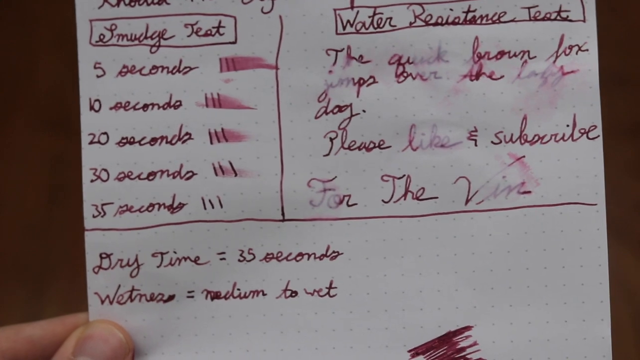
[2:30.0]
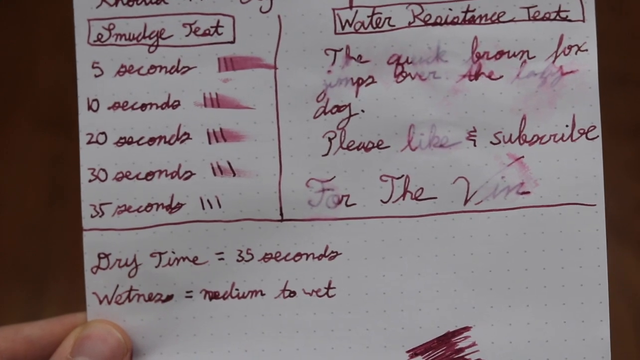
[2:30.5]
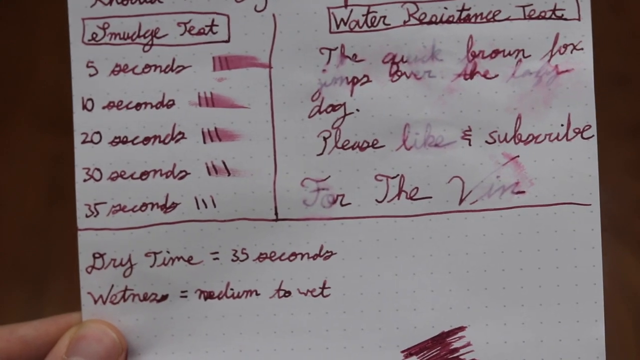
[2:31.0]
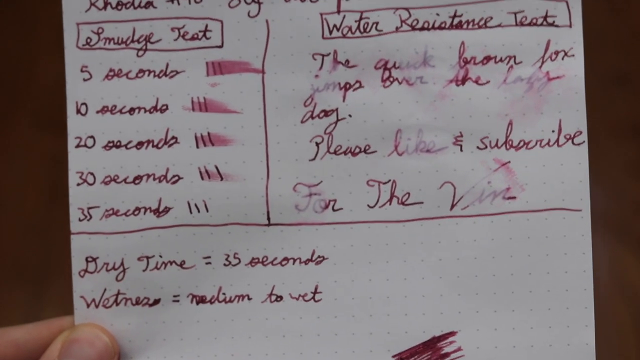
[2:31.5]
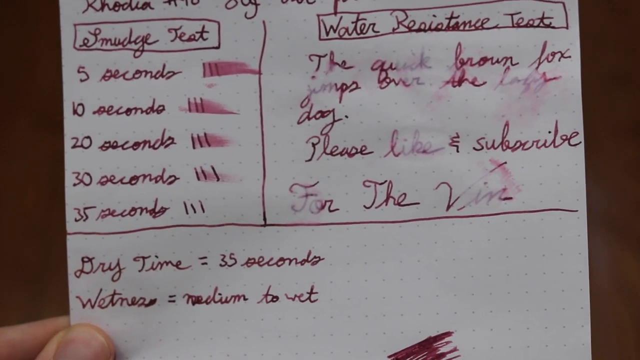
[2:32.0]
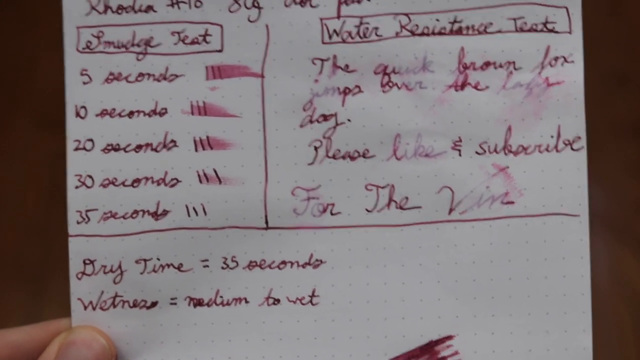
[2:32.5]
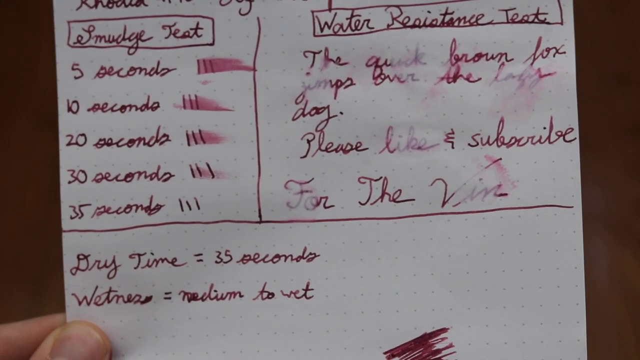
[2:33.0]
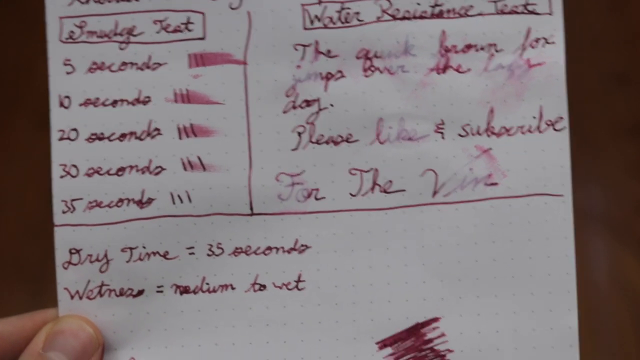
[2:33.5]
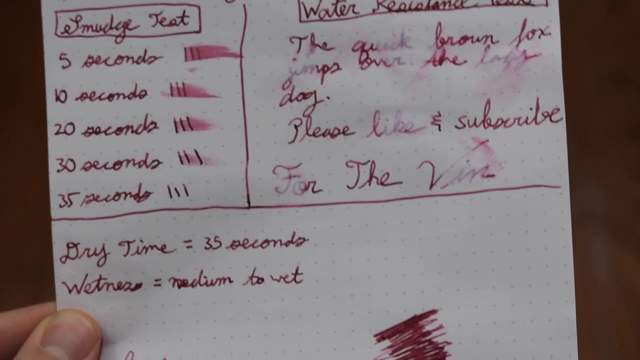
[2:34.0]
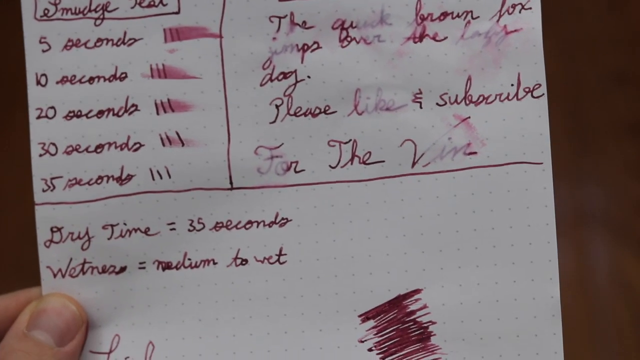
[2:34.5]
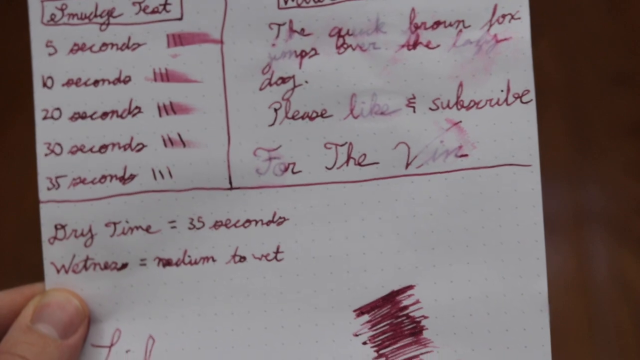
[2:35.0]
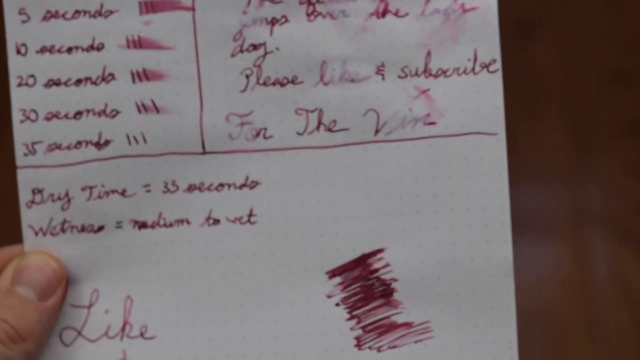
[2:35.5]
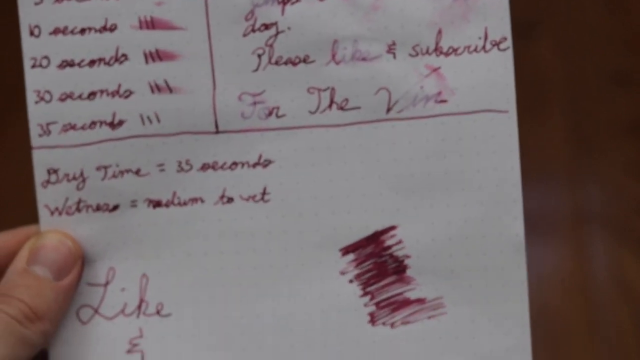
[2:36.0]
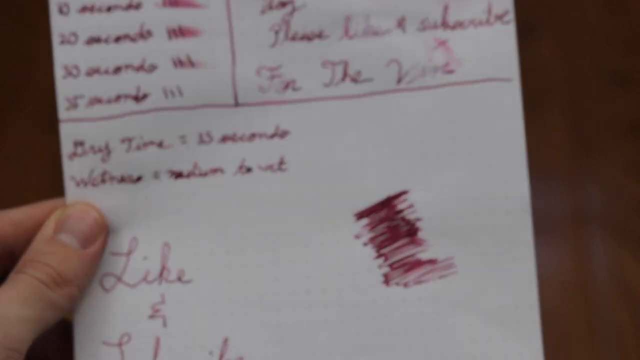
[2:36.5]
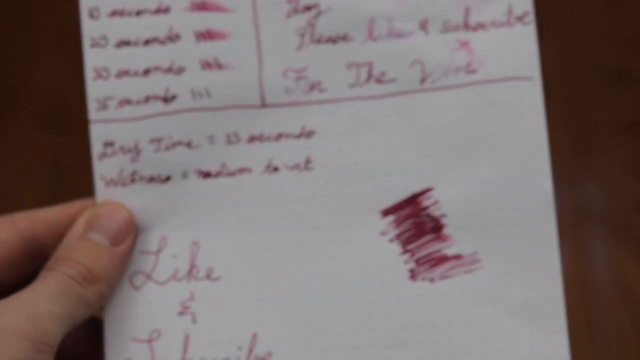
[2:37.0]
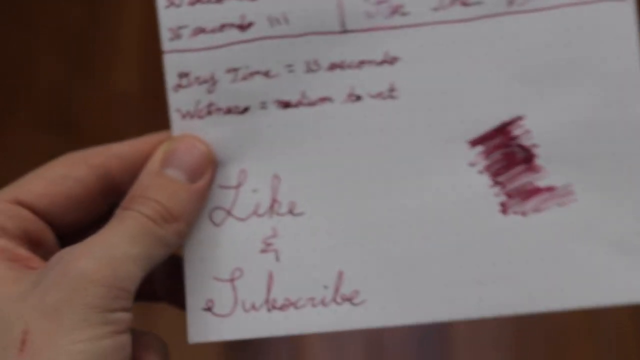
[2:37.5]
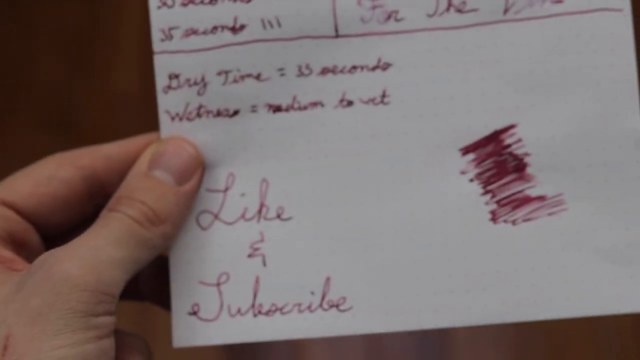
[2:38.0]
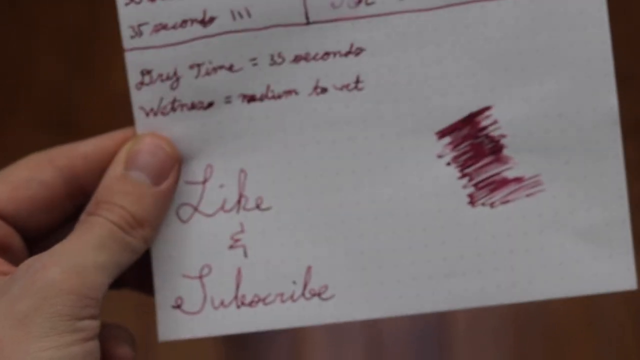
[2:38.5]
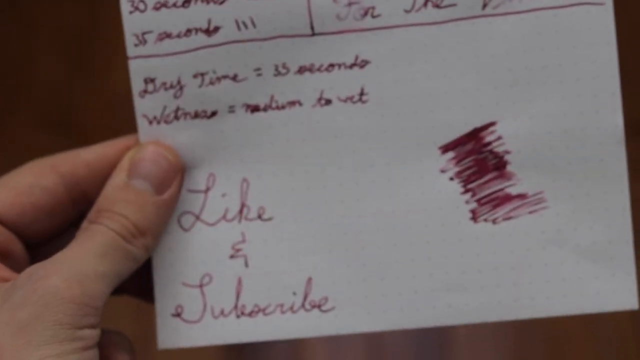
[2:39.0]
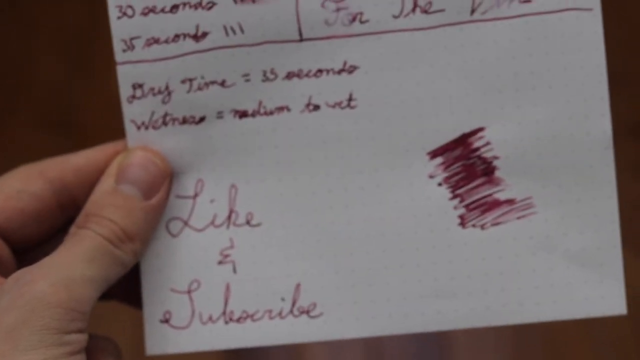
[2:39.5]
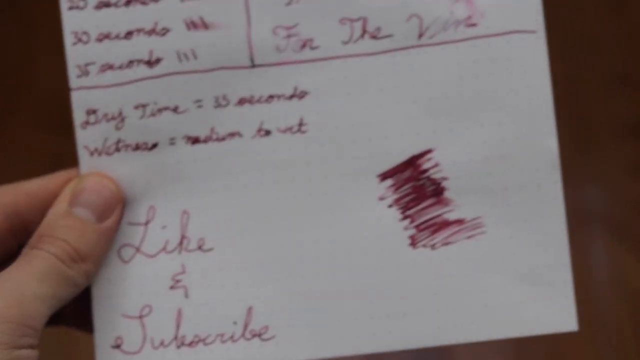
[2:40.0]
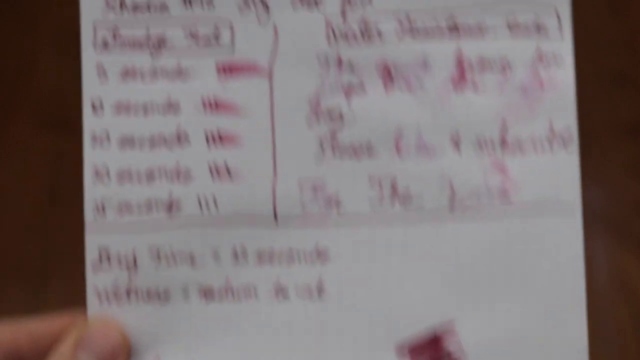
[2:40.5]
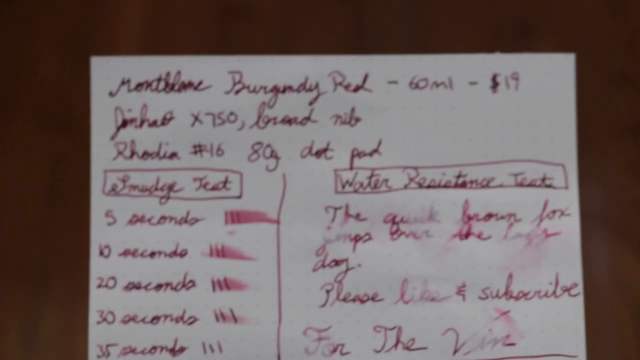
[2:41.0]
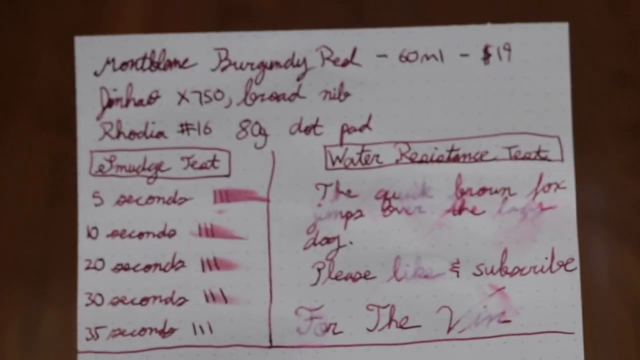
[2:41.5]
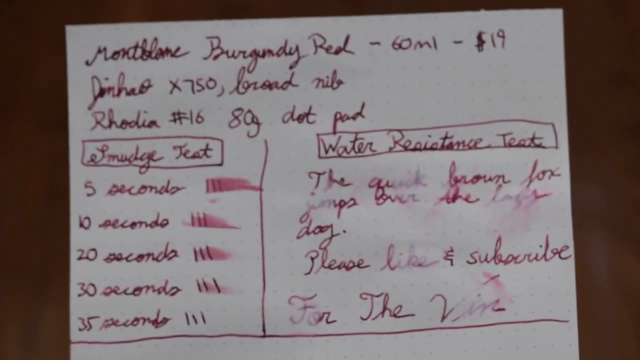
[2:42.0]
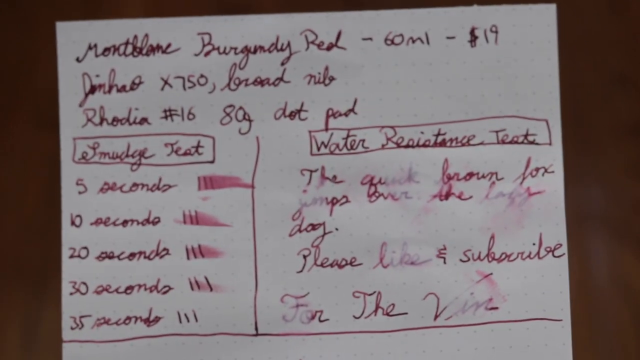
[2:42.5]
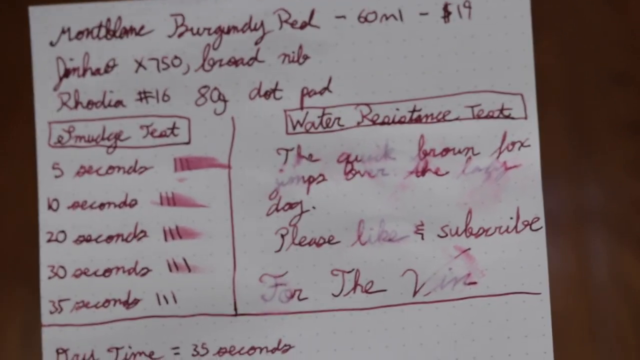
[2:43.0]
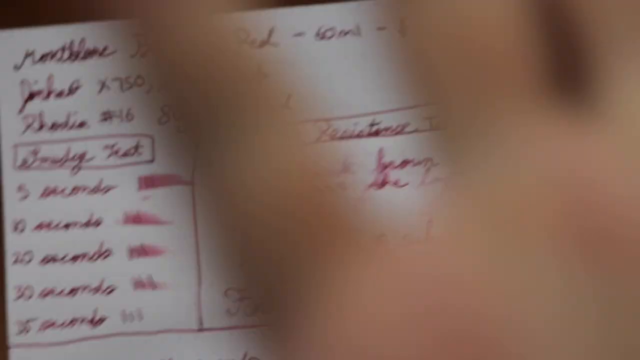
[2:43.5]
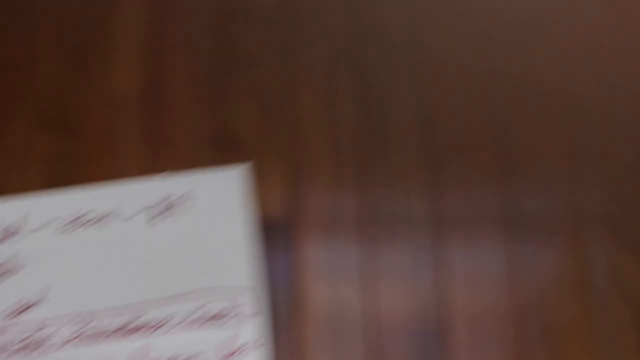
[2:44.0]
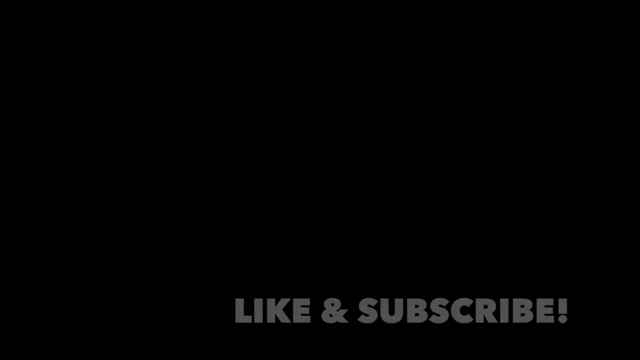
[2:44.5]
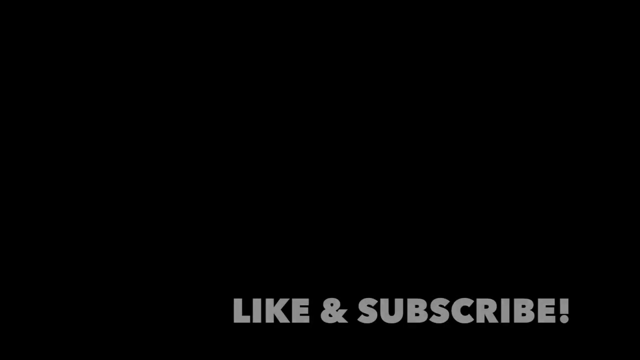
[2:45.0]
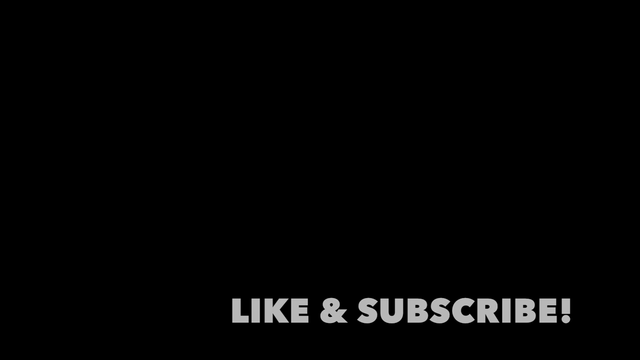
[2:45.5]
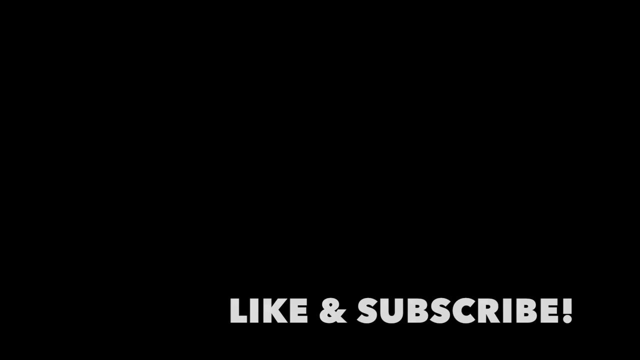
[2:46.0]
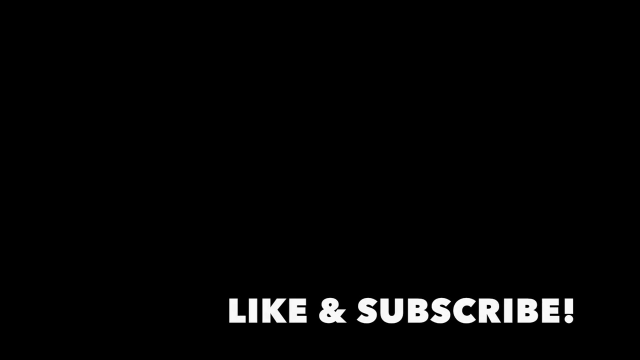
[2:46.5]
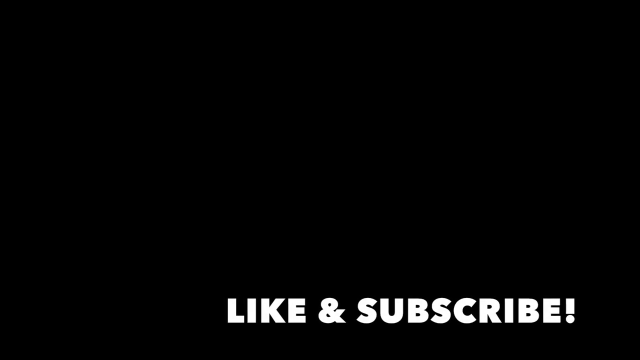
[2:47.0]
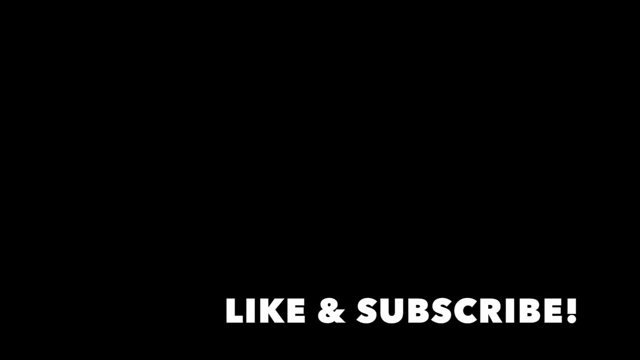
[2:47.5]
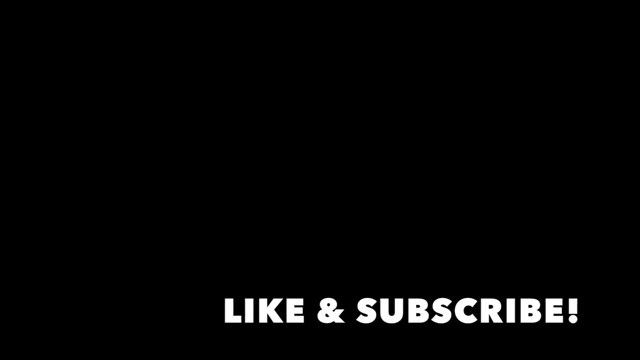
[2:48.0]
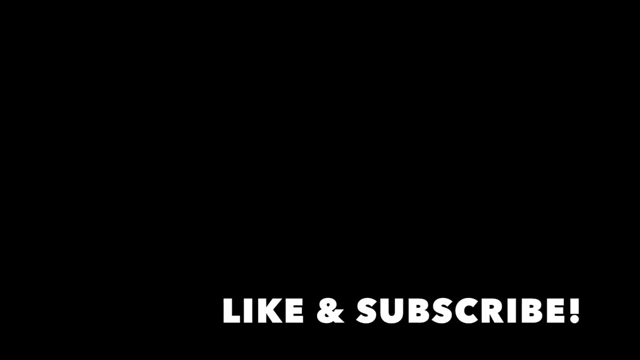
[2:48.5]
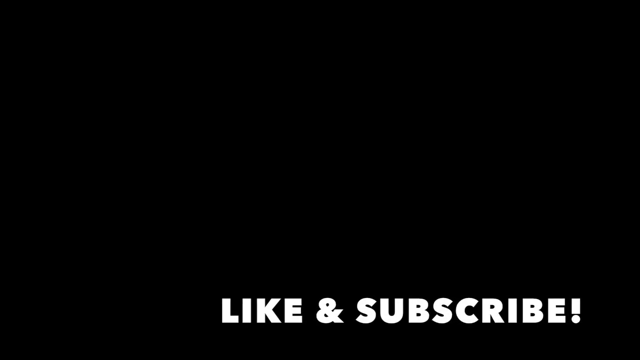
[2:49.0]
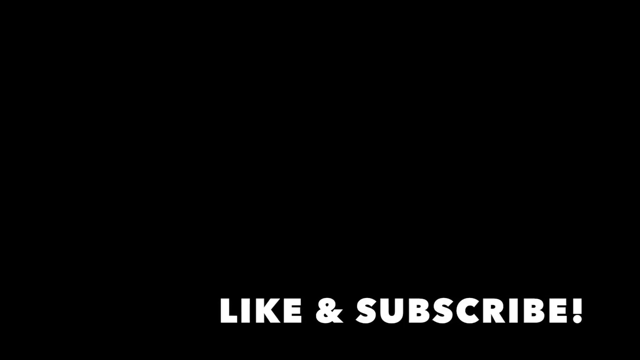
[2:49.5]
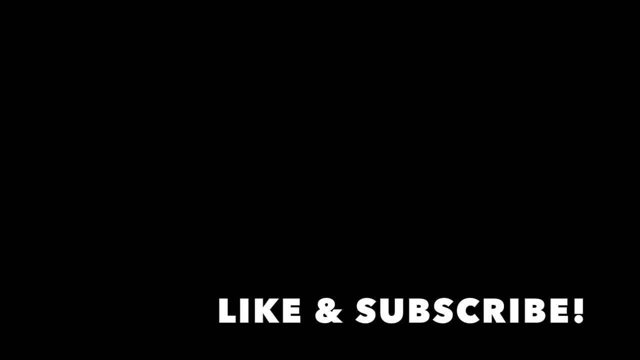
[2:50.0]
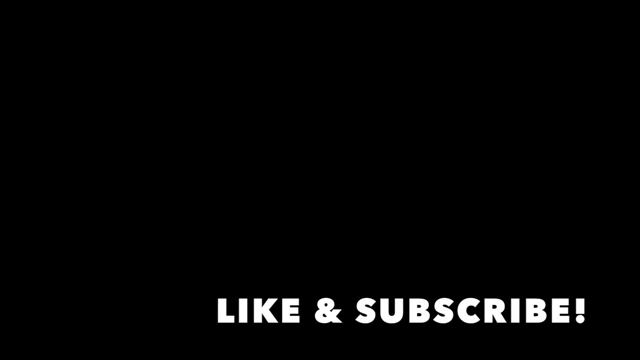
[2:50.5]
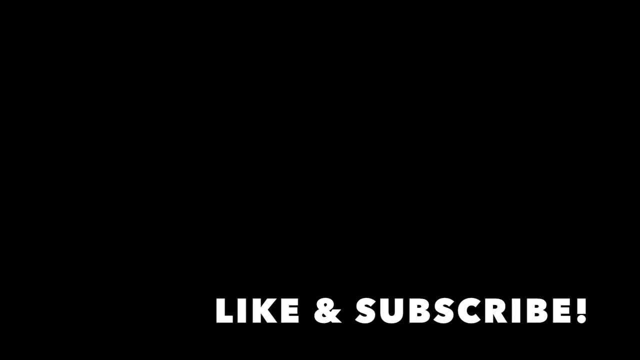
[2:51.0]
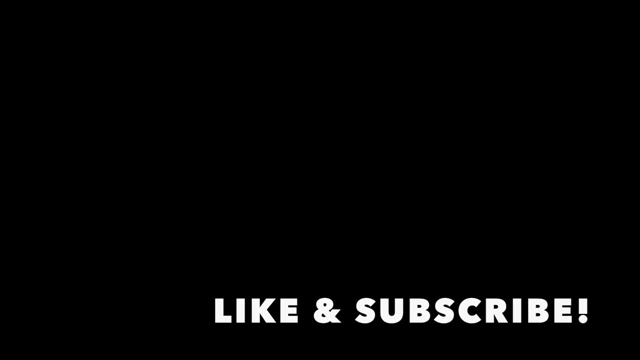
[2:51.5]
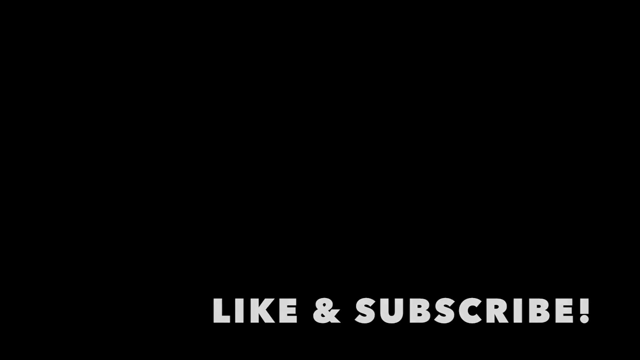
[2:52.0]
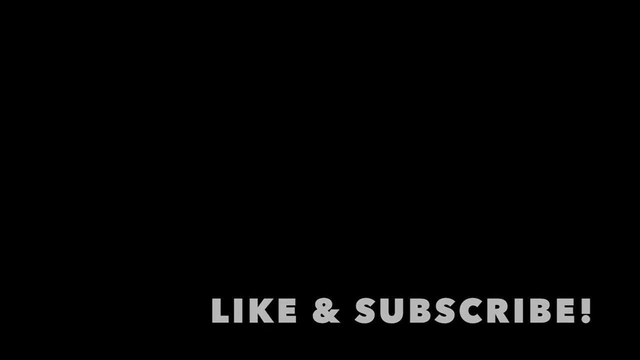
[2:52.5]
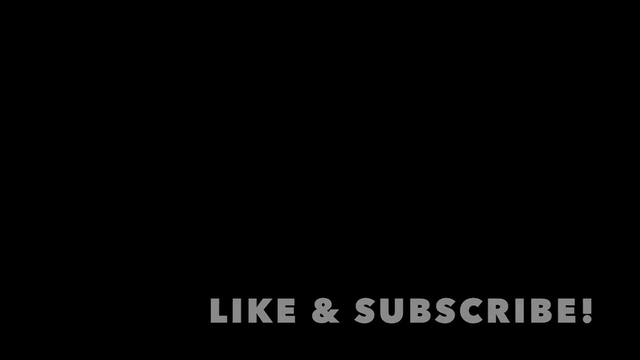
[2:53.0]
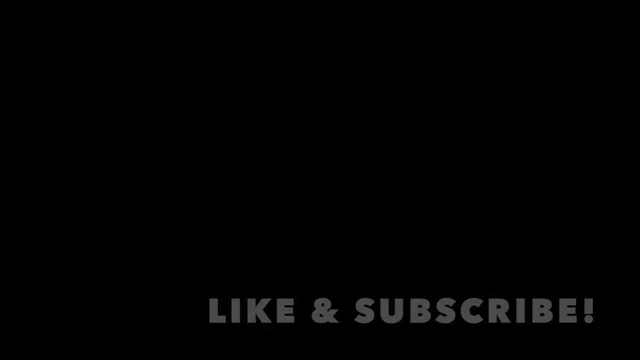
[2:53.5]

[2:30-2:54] With his right hand, thumb exposed, the presenter raises the paper to show its very bottom. The words "LIKE and SUBSCRIBE!" are written at the bottom, and toward the right-hand side there appears to be a scribble of lines back and forth, as if the writer was trying to clear the ink from the pen. The paper moves up and down. Then a hand, probably the right hand, comes across and covers the camera as everything fades to black, and the words "LIKE and SUBSCRIBE!" appear in the lower right-hand corner as the video ends.